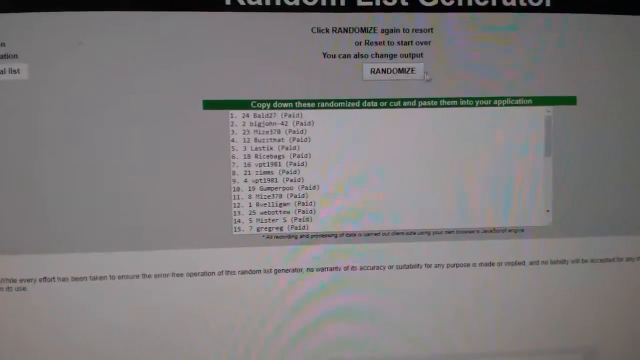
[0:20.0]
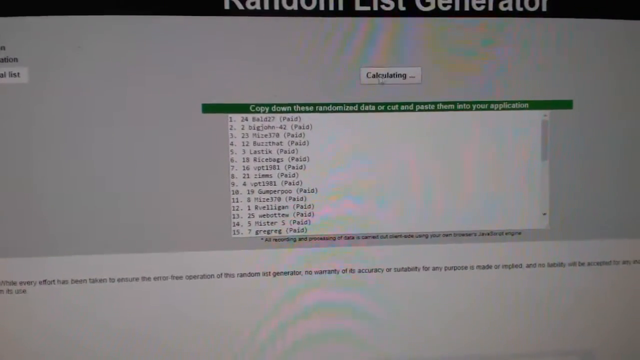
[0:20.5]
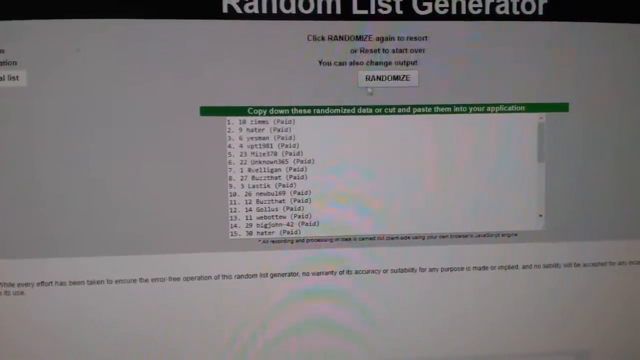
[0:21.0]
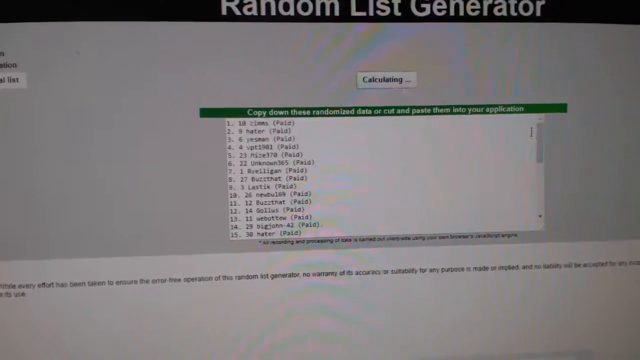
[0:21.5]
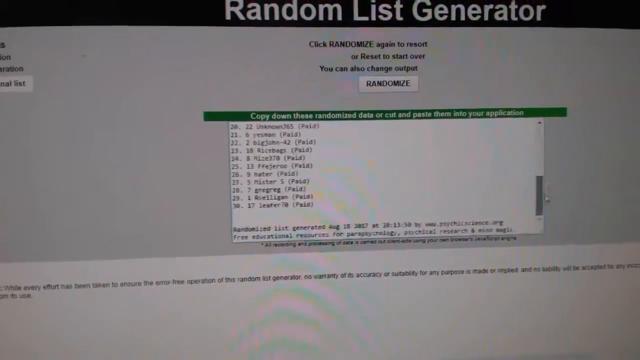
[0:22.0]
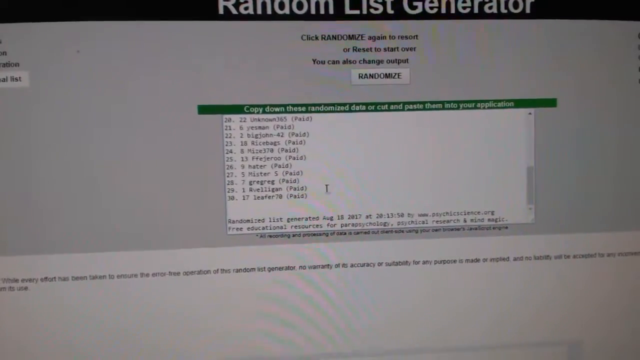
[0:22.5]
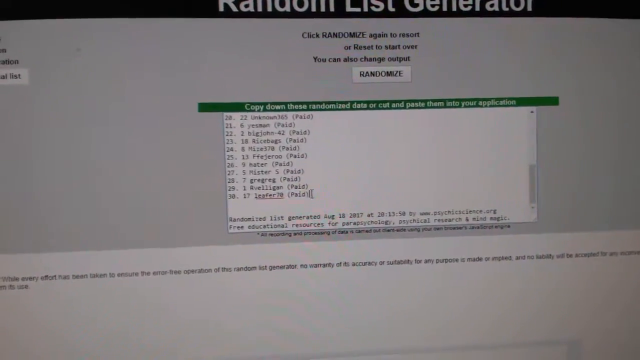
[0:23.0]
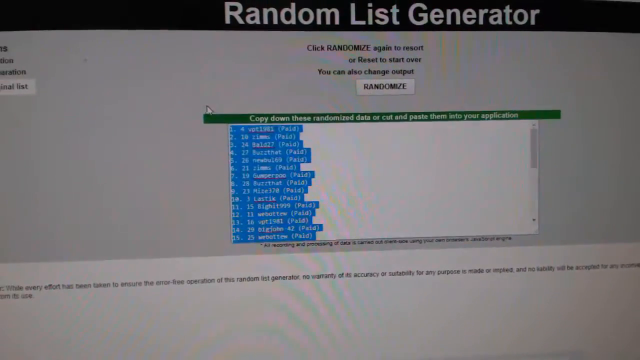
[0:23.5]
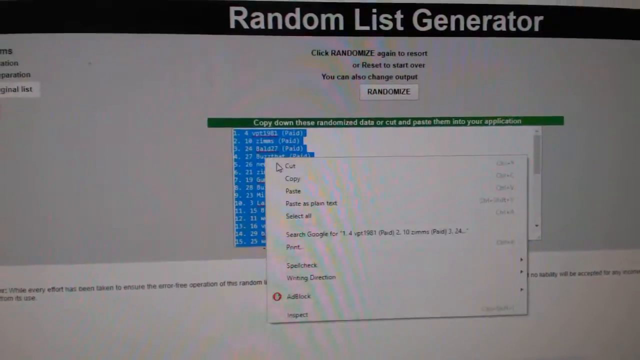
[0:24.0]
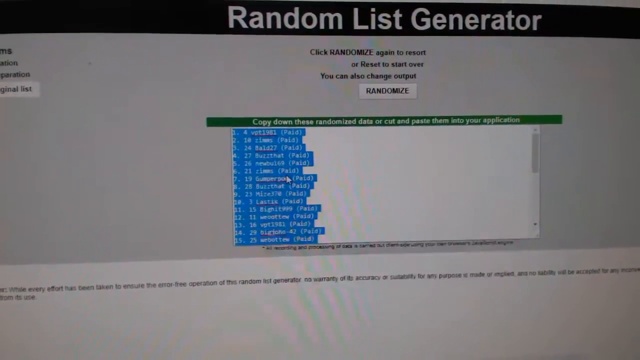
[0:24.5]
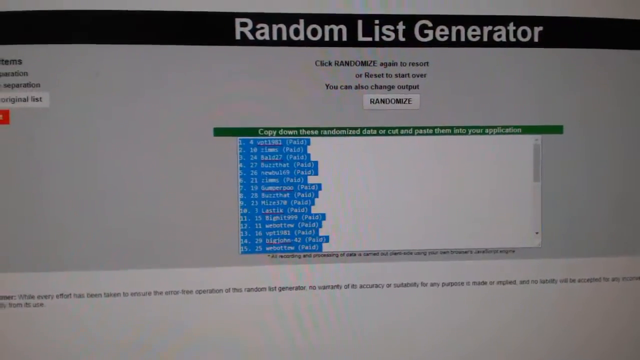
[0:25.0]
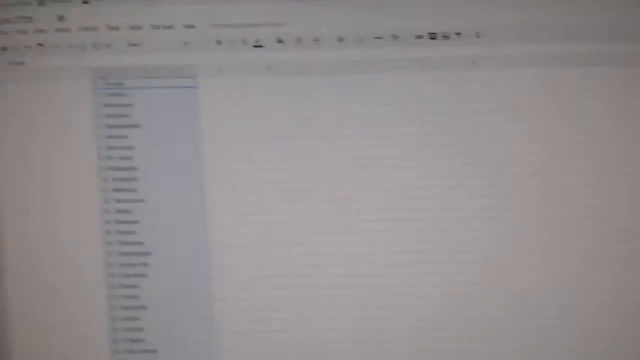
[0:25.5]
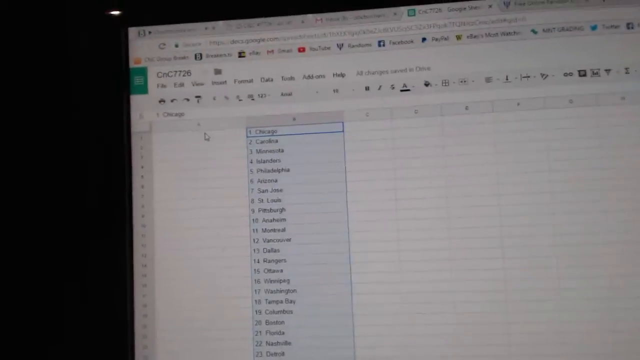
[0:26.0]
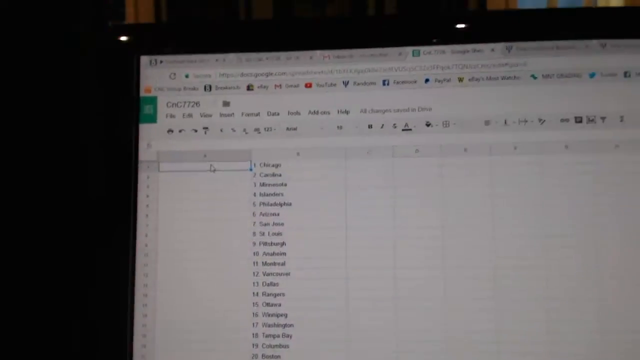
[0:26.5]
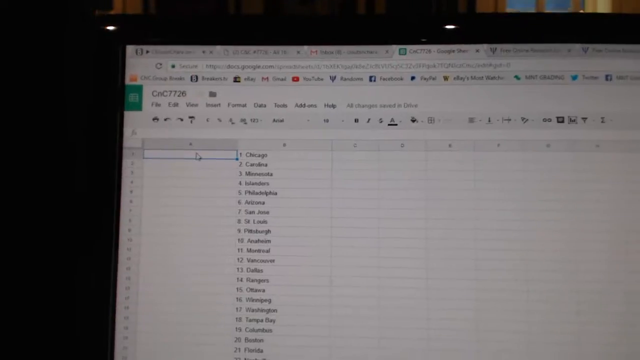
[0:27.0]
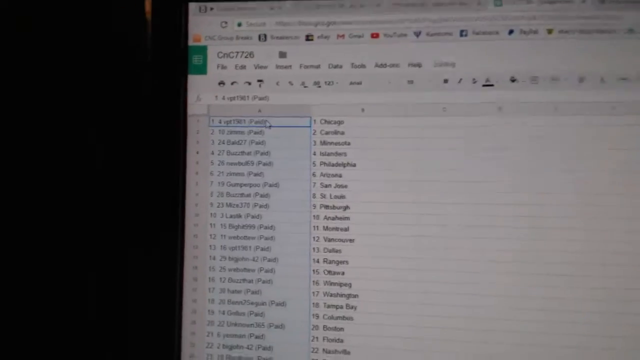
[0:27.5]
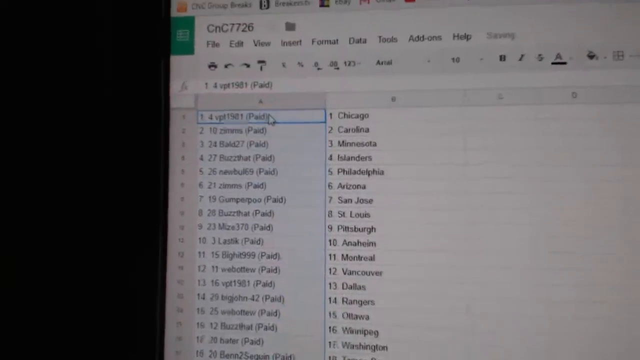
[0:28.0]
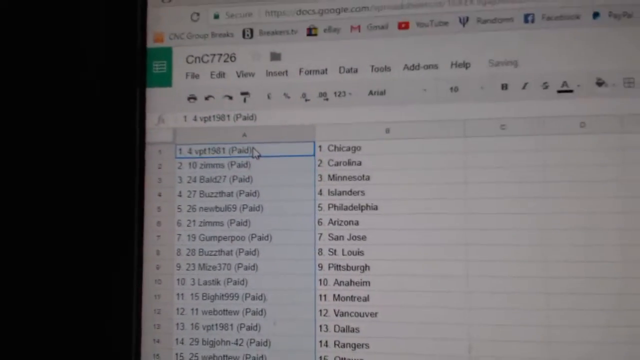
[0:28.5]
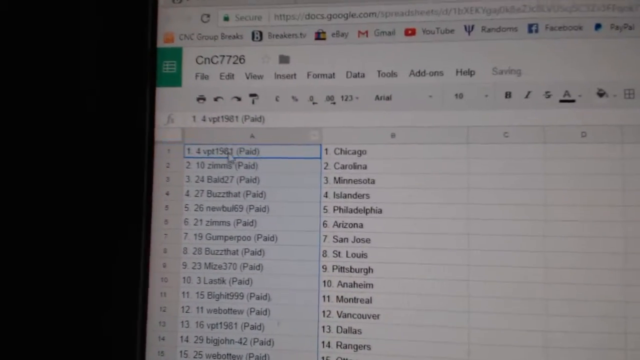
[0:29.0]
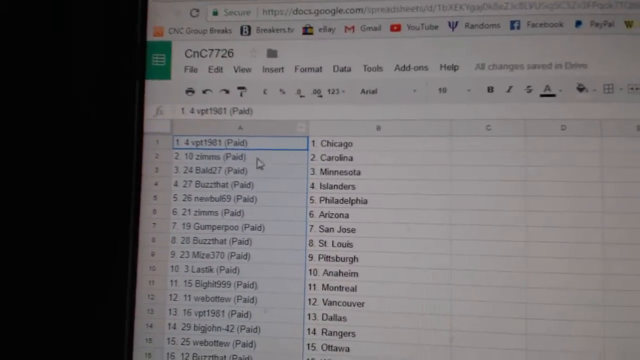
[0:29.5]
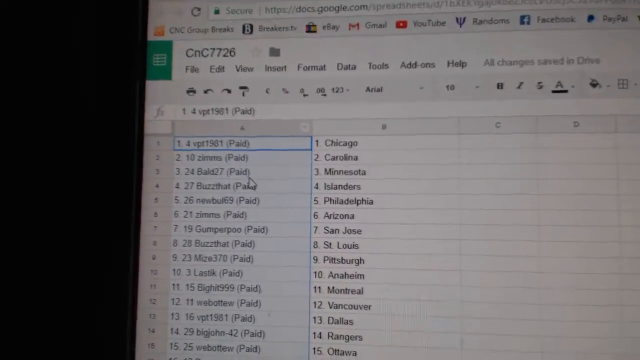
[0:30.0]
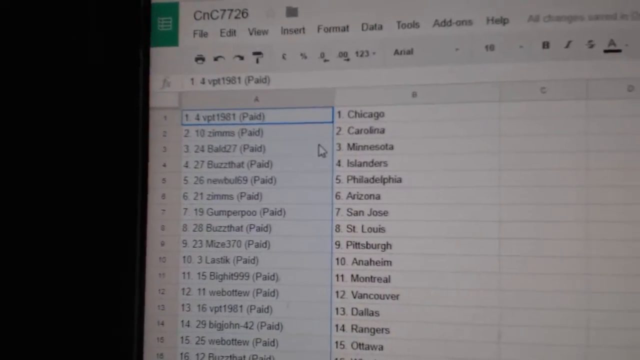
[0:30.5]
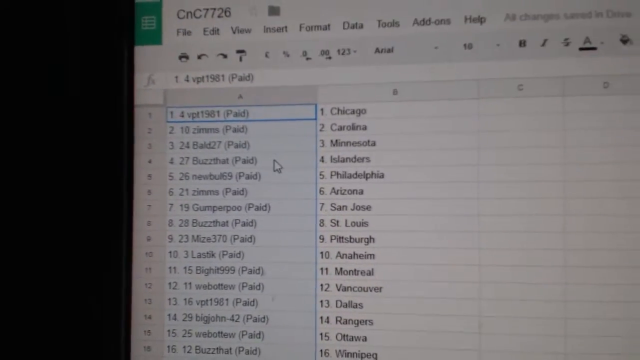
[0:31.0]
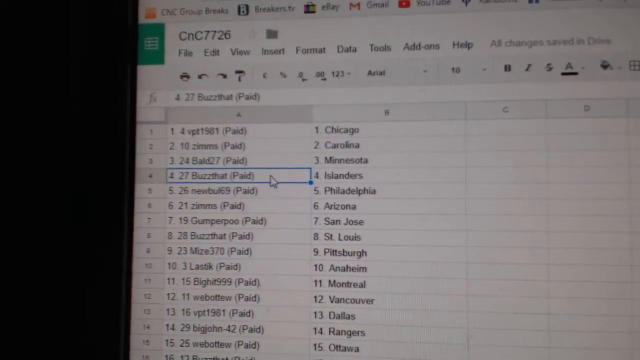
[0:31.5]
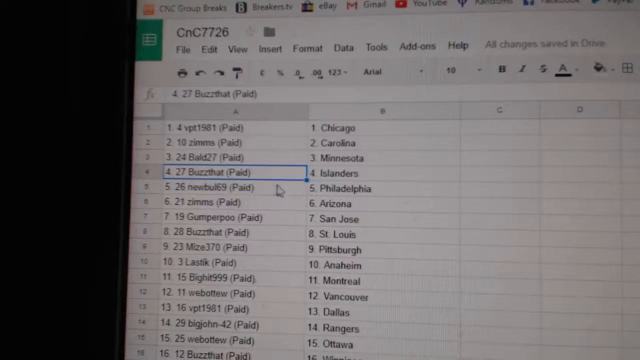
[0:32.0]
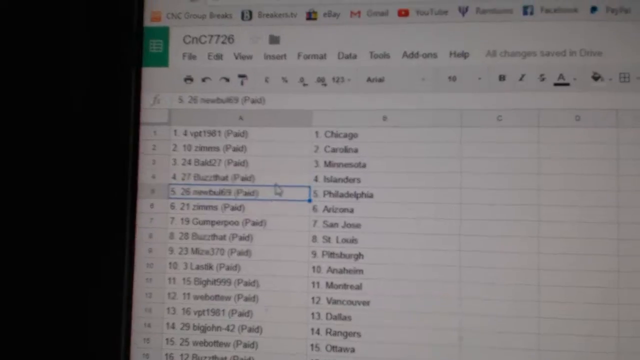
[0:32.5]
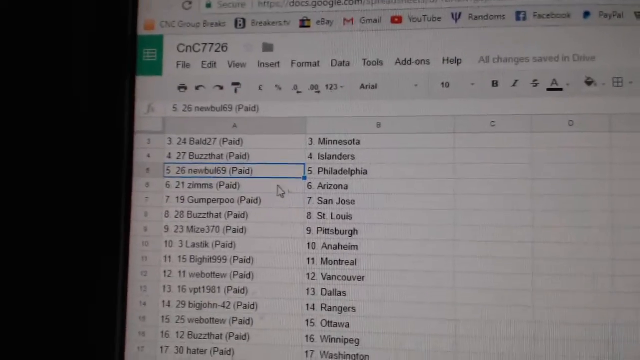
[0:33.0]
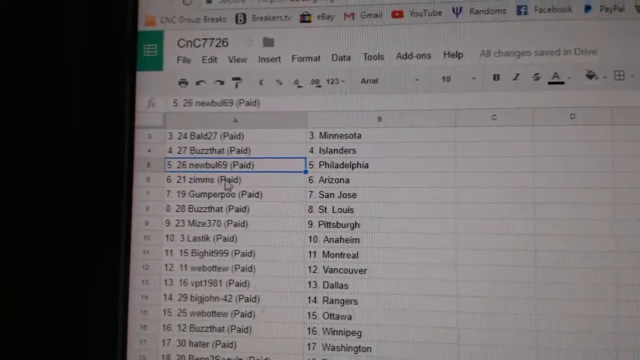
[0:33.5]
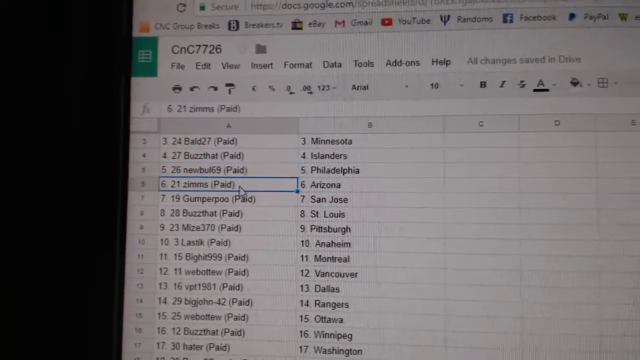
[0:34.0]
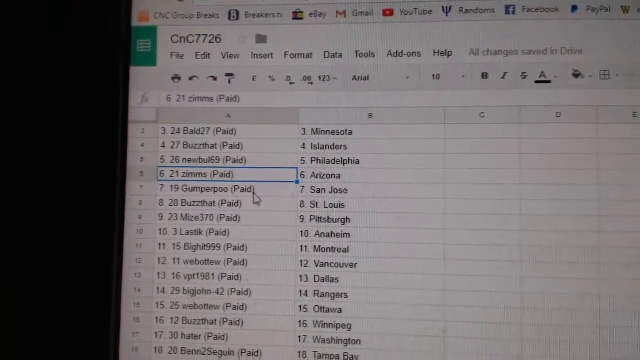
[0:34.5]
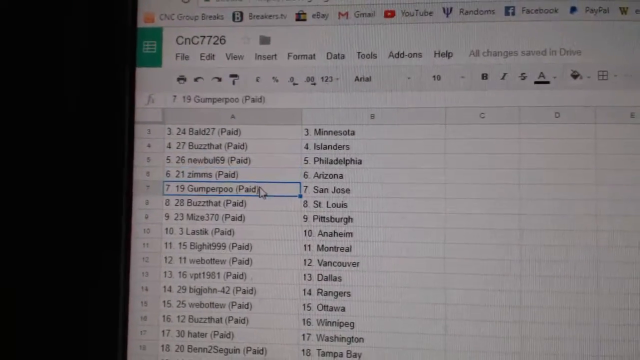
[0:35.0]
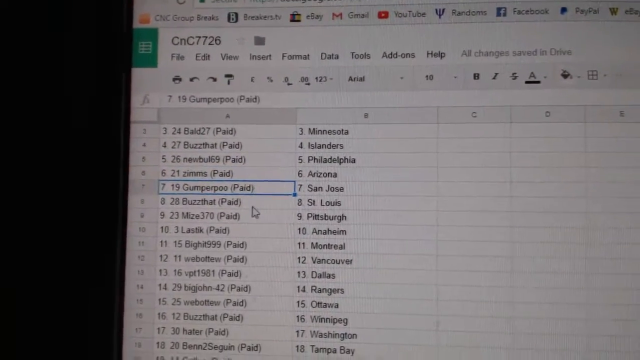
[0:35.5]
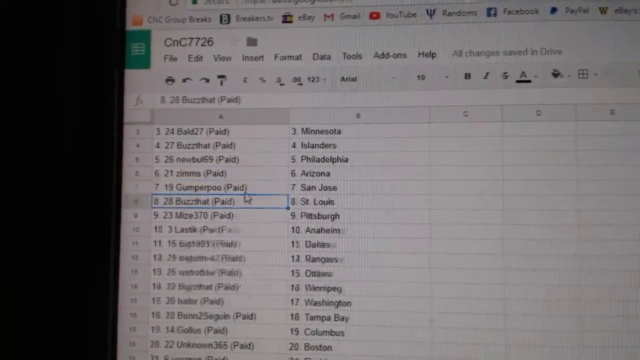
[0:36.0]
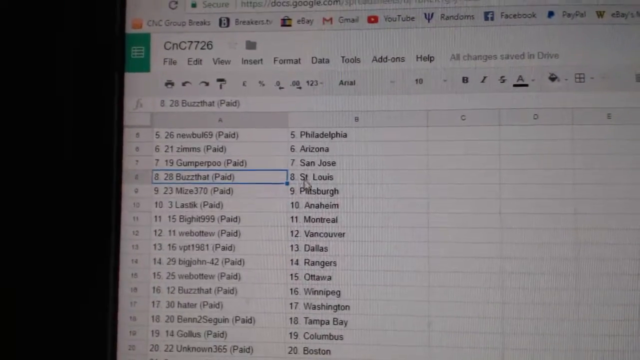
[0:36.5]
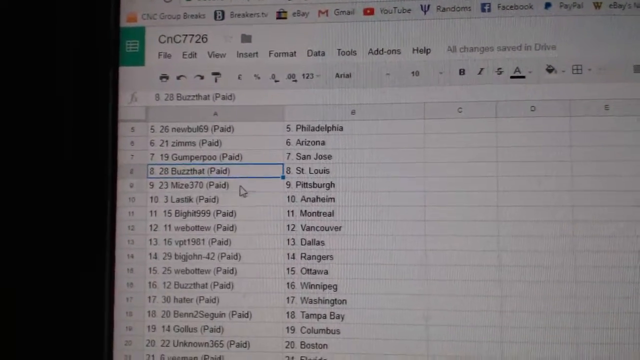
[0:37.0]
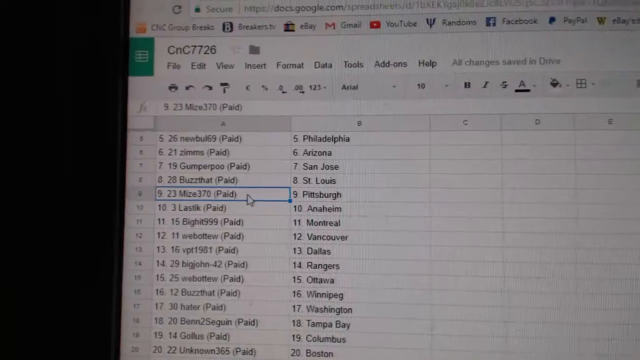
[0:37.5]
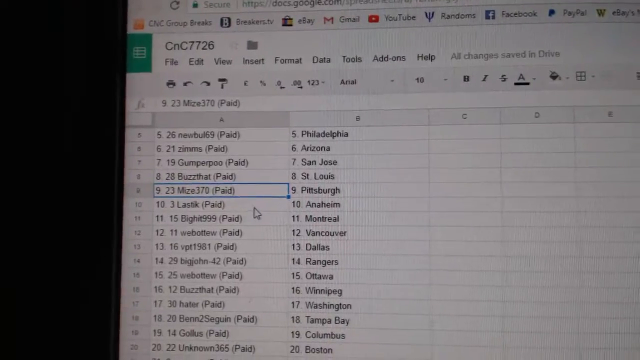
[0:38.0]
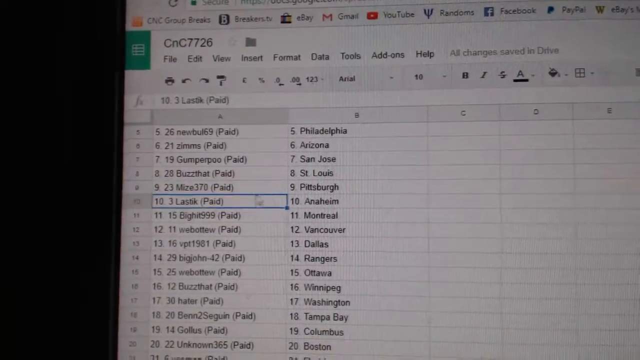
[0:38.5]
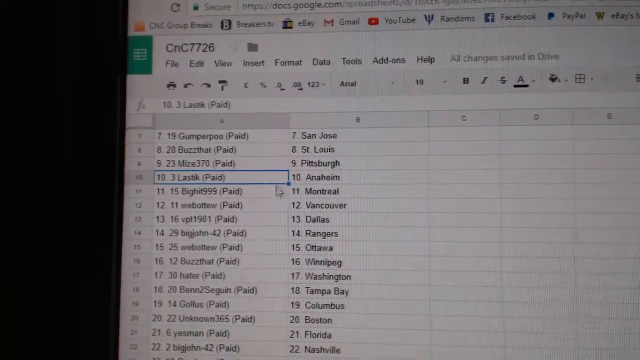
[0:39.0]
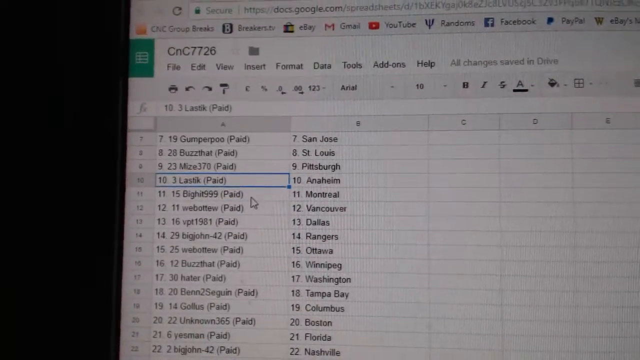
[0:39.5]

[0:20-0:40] A computer screen is recorded from another camera. The person is on a random list generator website, as the page title states, and presses the randomize button a number of times with items in the box to be randomized. They scroll to the bottom of the list and click the copy button to copy all of the randomized items. They move to a spreadsheet and paste all of the items under column A, the first column. A close-up shows the two columns: column A holds a number of usernames or similar, each followed by the word paid in brackets, and column B holds a number of cities. The cursor moves down the list, potentially showing the connection between each entry in column A and column B step by step.